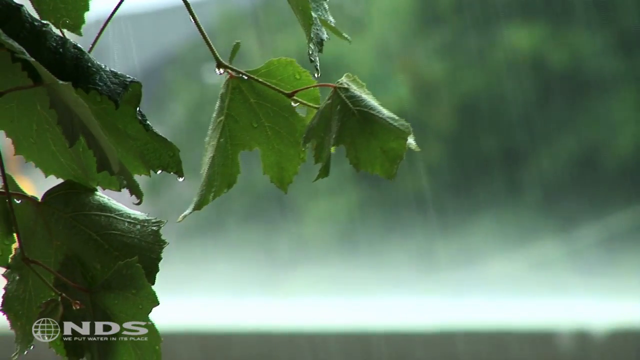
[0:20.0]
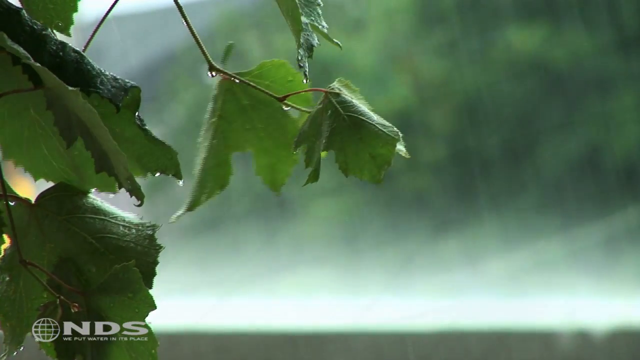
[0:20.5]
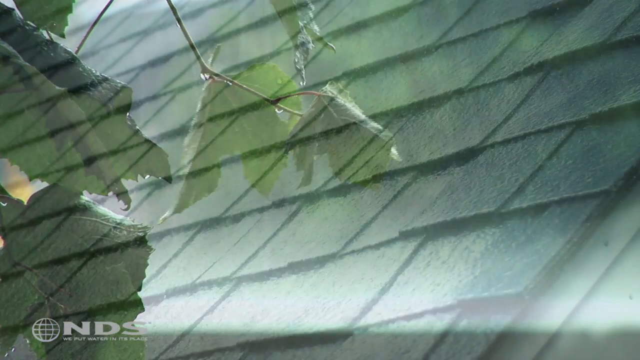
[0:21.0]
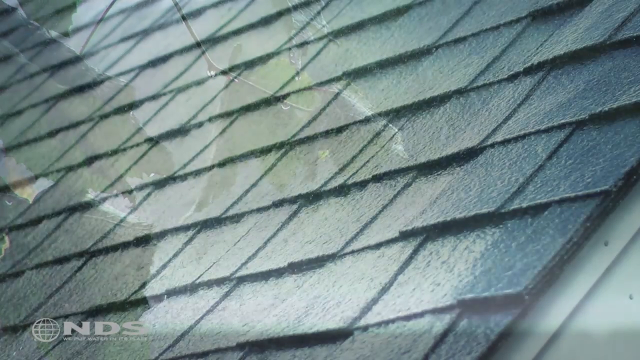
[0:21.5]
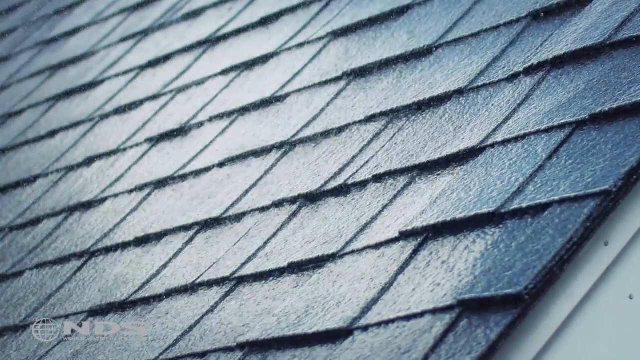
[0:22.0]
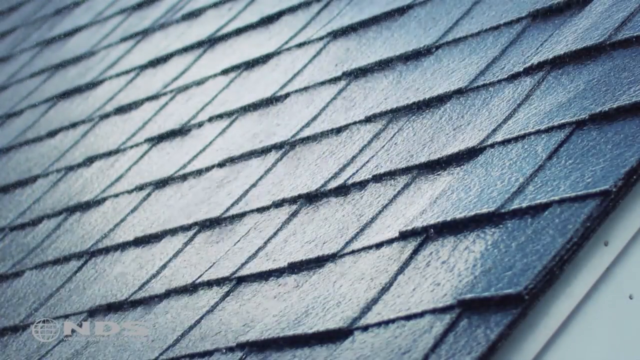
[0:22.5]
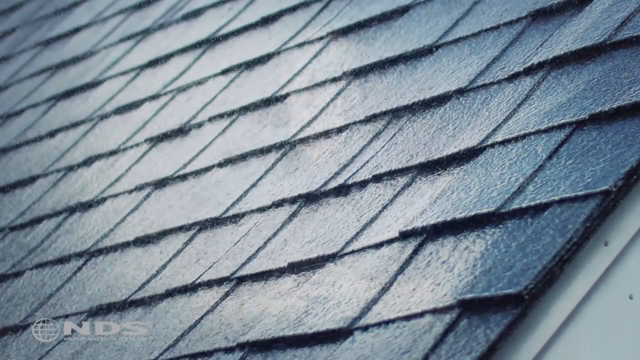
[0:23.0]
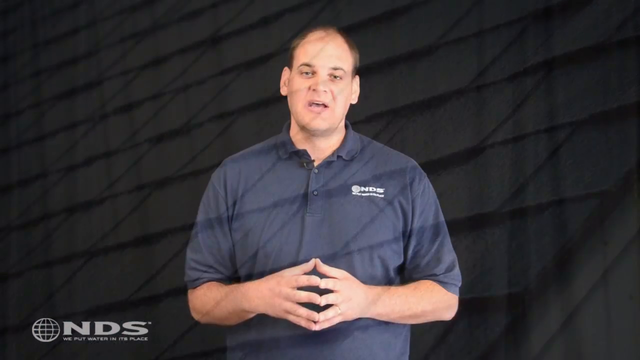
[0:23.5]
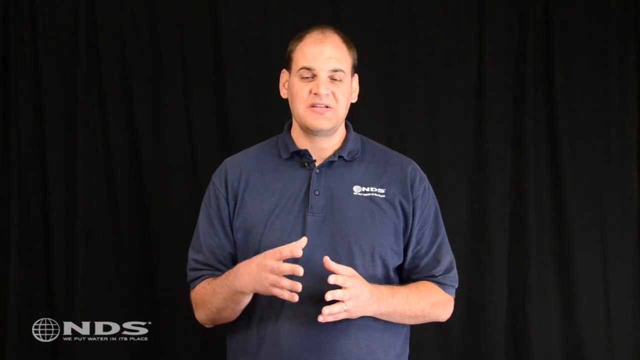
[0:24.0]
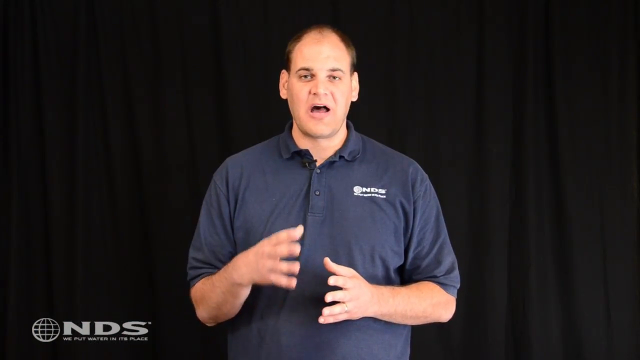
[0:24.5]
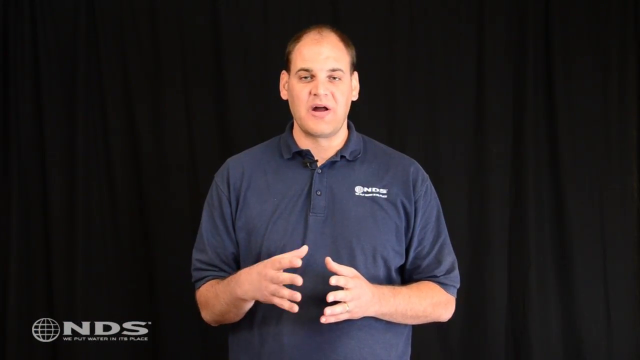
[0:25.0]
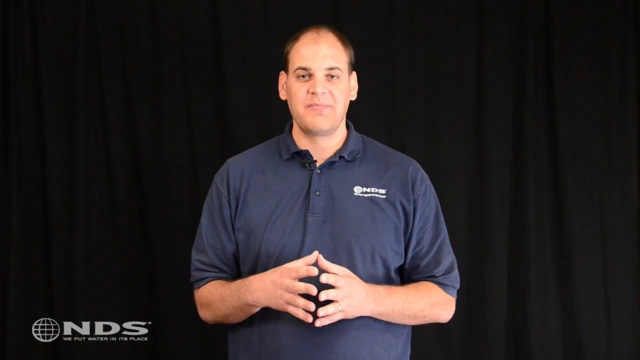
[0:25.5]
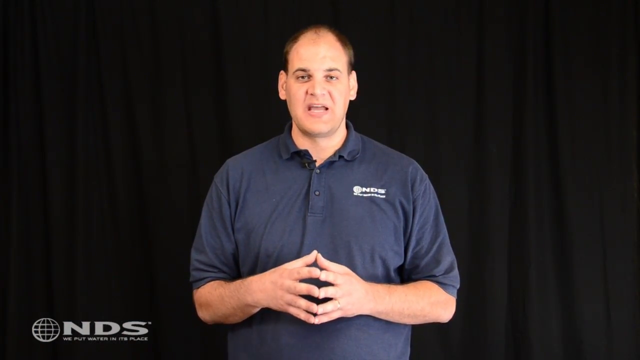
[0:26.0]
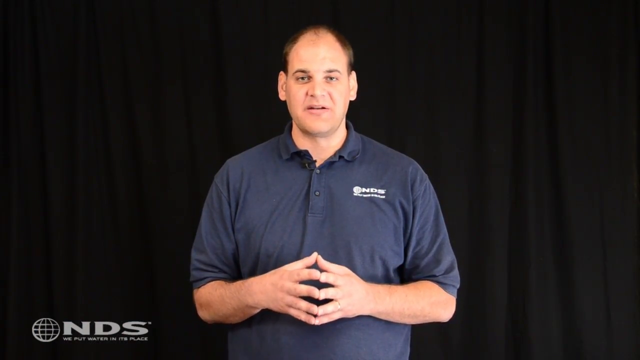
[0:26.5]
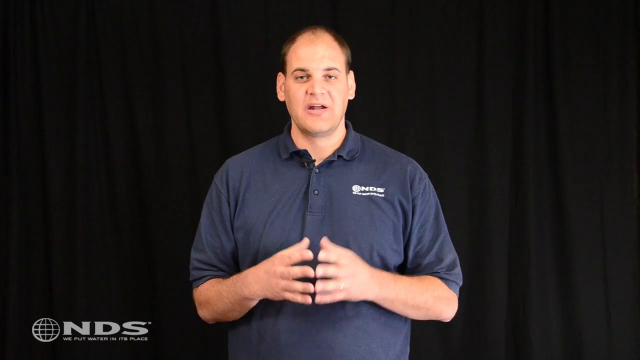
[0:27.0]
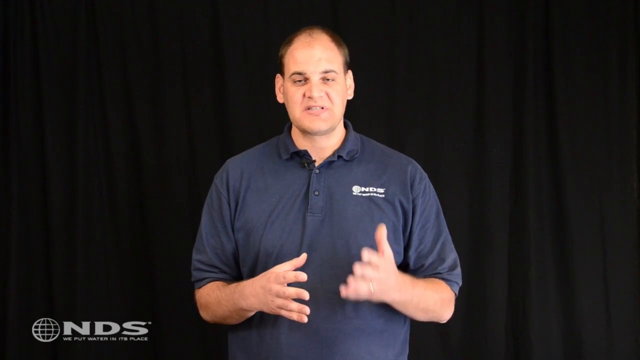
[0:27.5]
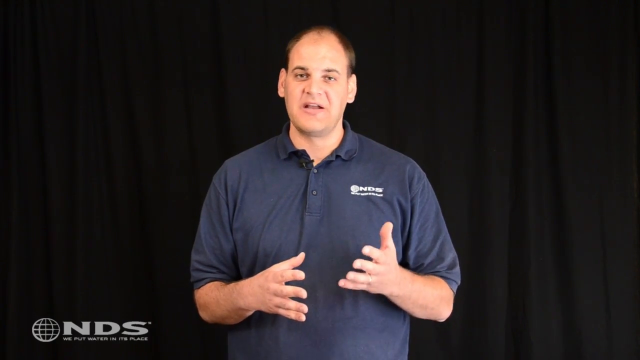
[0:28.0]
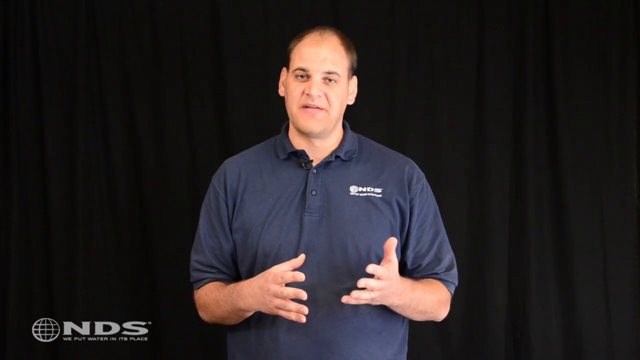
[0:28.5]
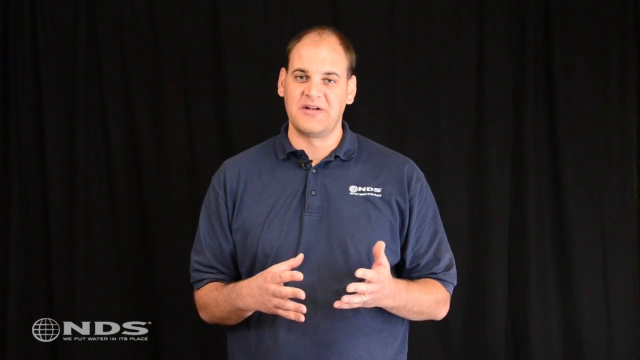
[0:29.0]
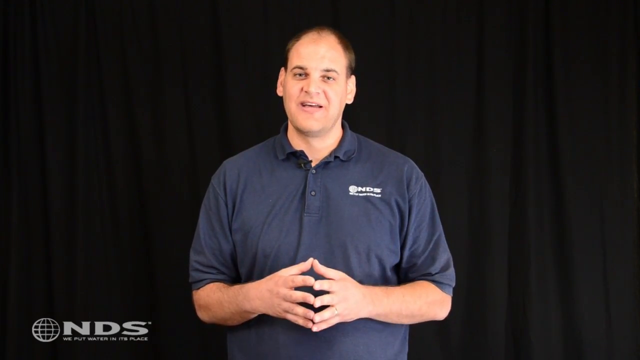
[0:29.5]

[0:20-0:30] Rain falls softly on the leaves of a tree, the background out of focus. The video then shows a close-up of a shingled roof being rained on; it is unclear whether the shingles are shake or asphalt. The video returns to the young man in front of the black curtained backdrop, talking. His fingers are spread about a finger-width apart, with fingertips and thumb tips touching. As he speaks, he either bounces his hands up and down together or takes his right hand away to gesture for emphasis, then brings it back with fingertips touching. He continues speaking, bounces his hands, lifts his left hand to gesture with it, and brings it back so all fingertips and thumbs touch. Suddenly he lifts his right hand and points his index finger at the camera.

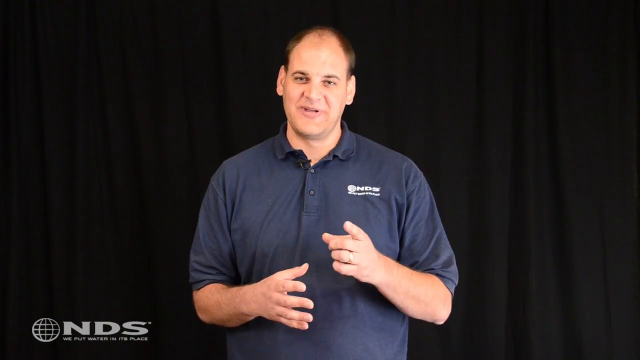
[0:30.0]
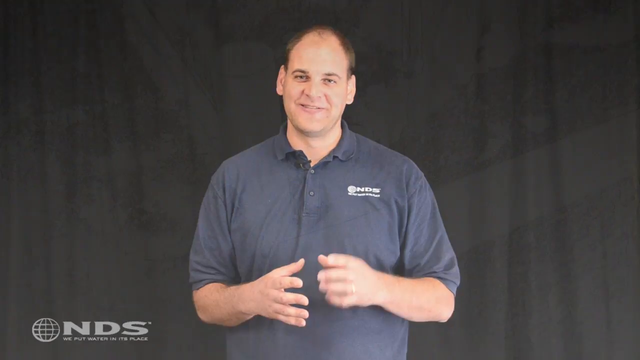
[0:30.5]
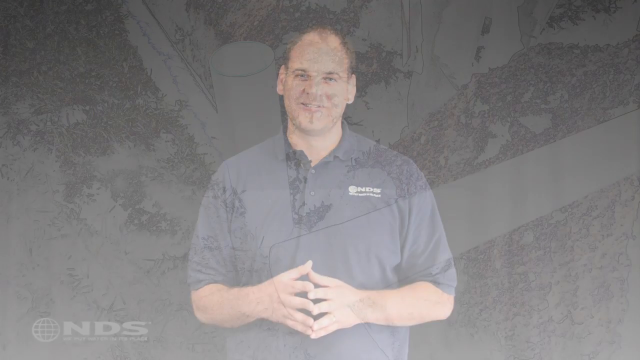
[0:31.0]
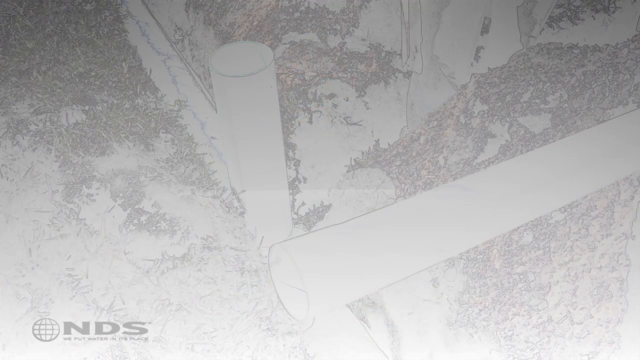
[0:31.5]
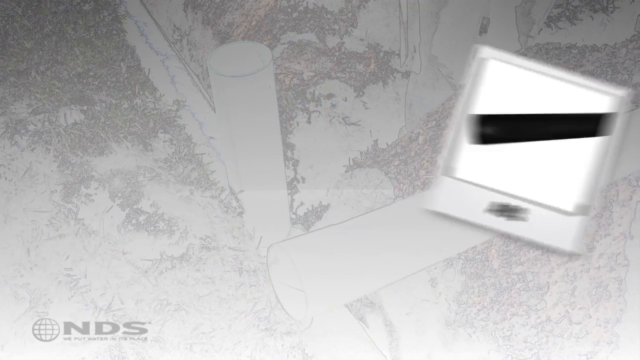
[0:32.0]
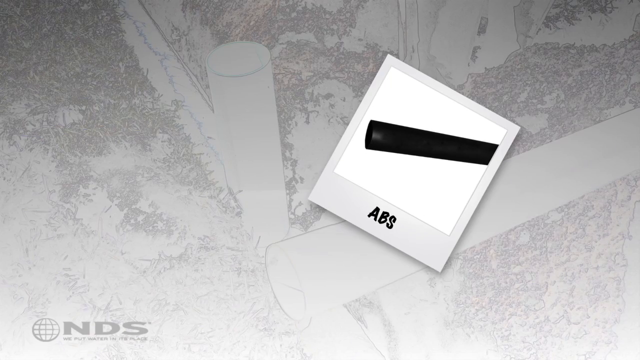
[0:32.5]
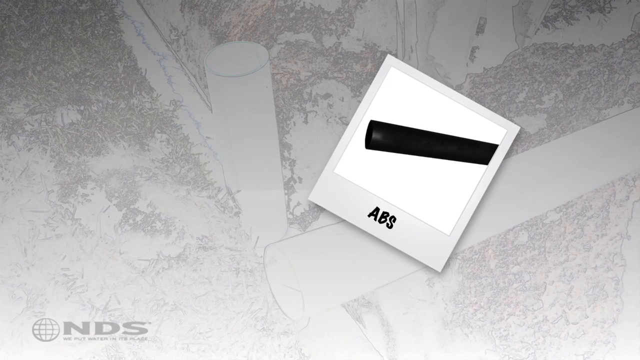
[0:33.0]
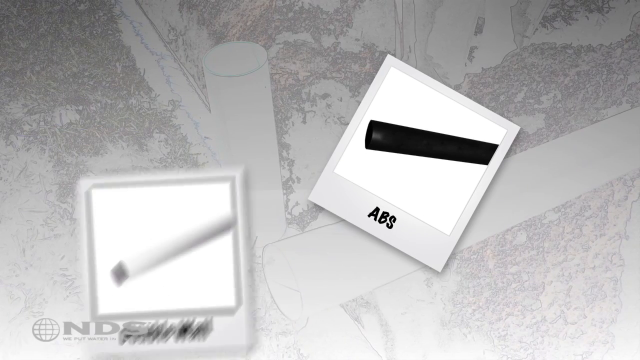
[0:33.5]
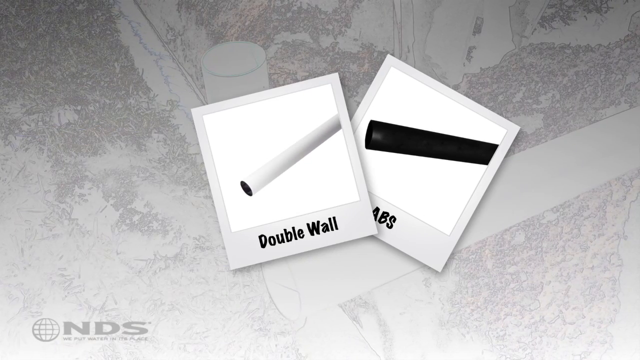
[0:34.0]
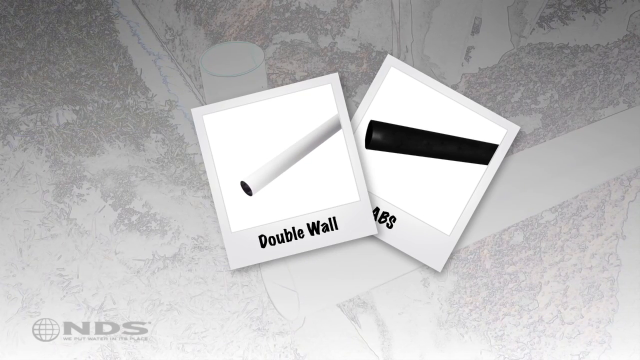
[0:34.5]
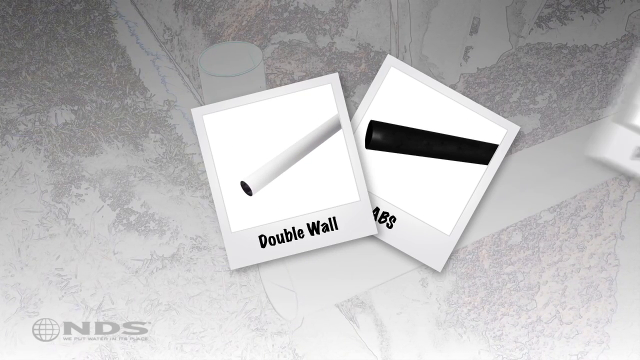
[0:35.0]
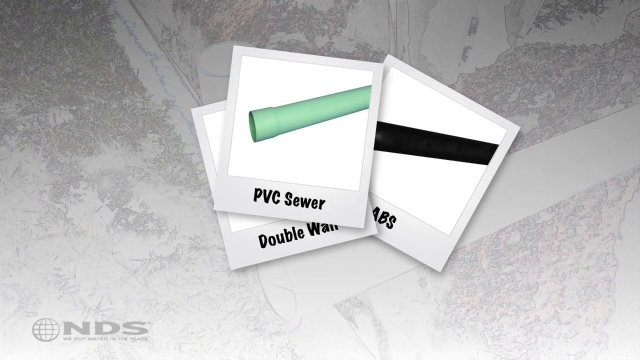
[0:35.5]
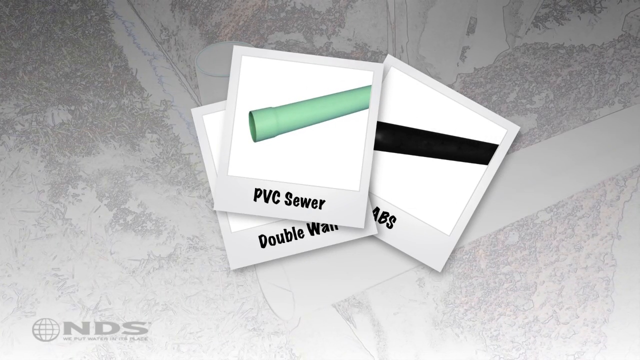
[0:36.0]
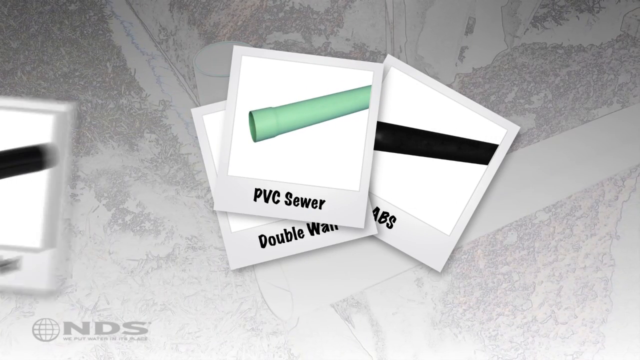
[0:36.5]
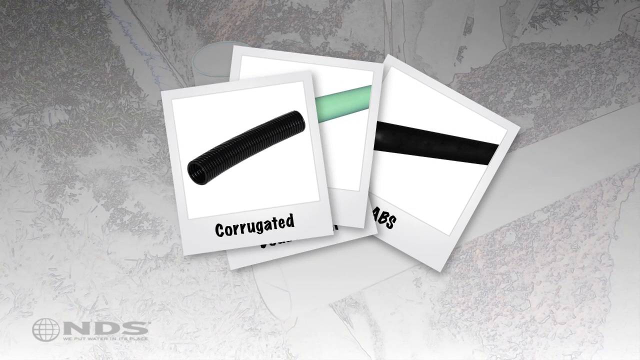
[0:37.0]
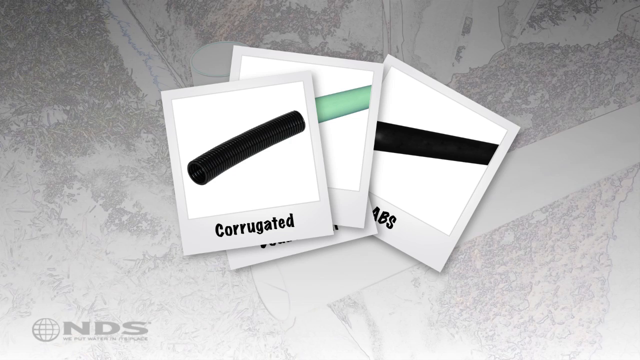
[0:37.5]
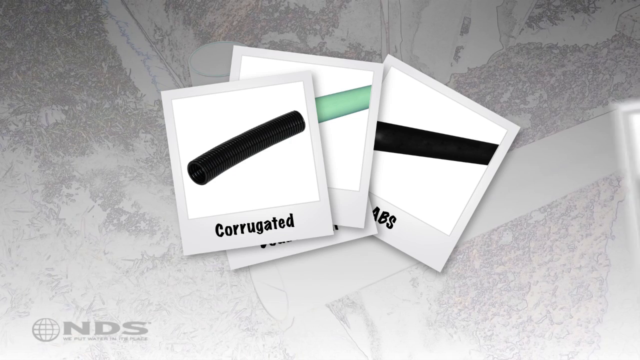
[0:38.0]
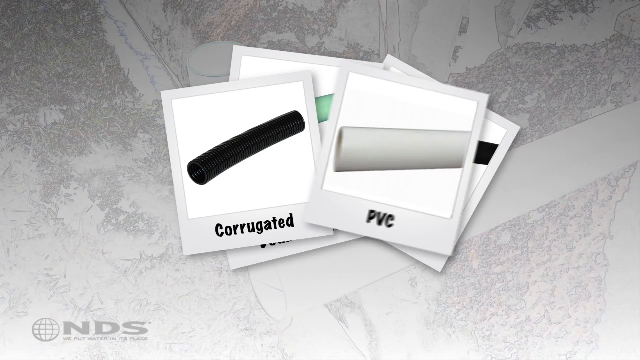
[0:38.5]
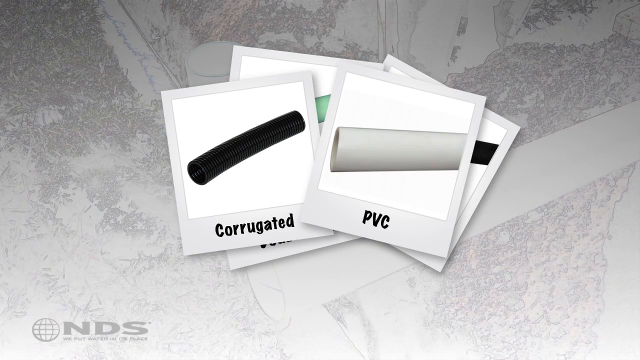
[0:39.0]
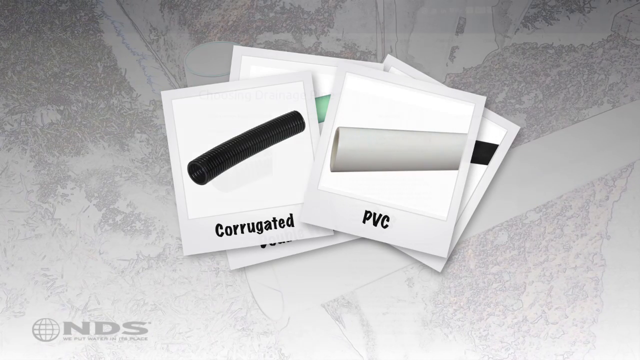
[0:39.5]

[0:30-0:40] The man points at the camera, and as he lowers his hand, the video changes to a white and gray abstract background onto which what appear to be instant camera pictures are thrown, each with a picture in the center and a word or two at the bottom. The first picture appears to show a black pipe and says "ABS". The second shows a white pipe with a black end and says "double wall". The third shows a green pipe and says "PVC sewer". The fourth says "corrugated" and shows a black pipe. The fifth shows a white pipe with "PVC" at the bottom. The pictures are thrown to the center of the screen one at a time, alternating sides.